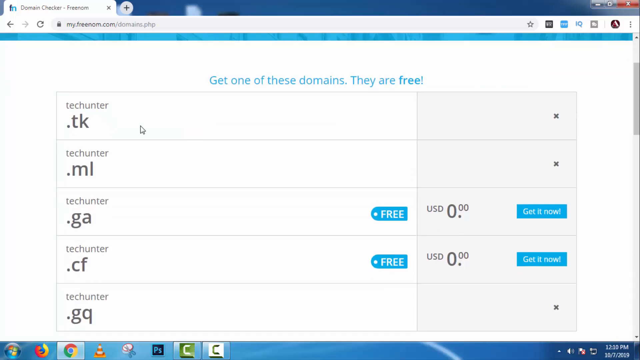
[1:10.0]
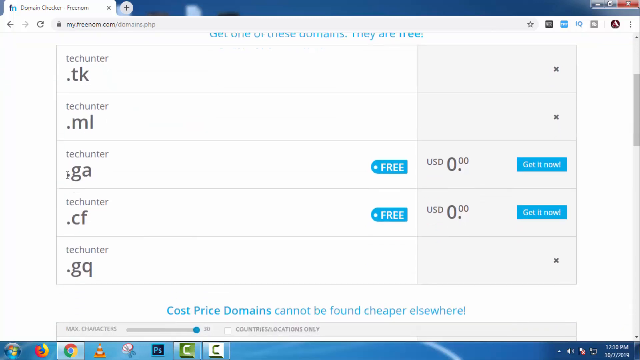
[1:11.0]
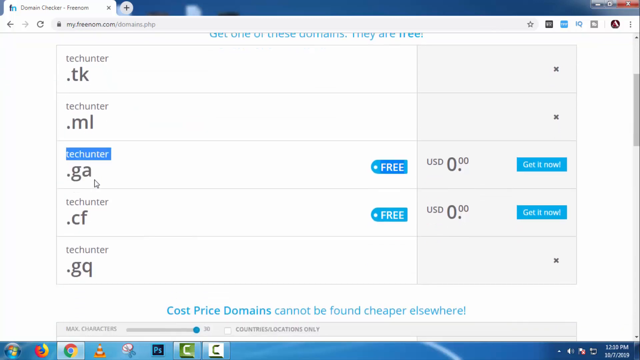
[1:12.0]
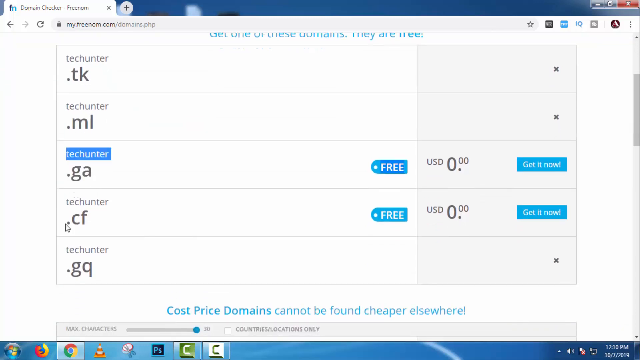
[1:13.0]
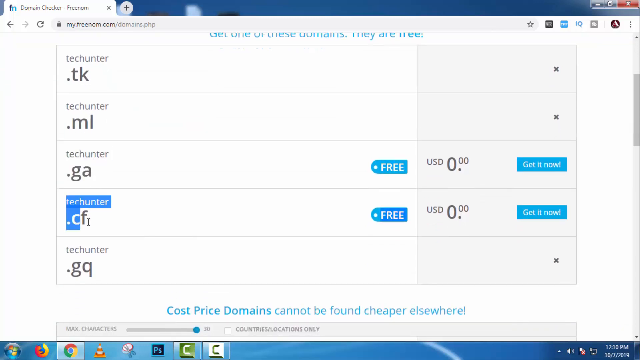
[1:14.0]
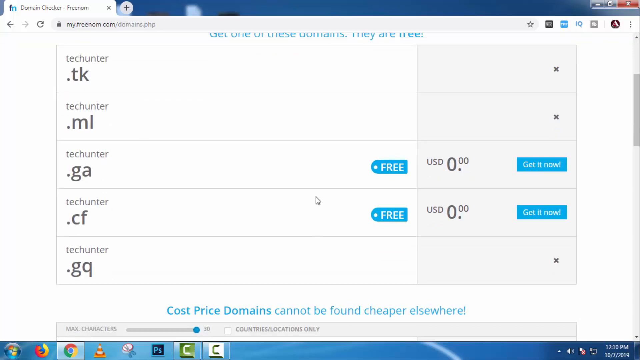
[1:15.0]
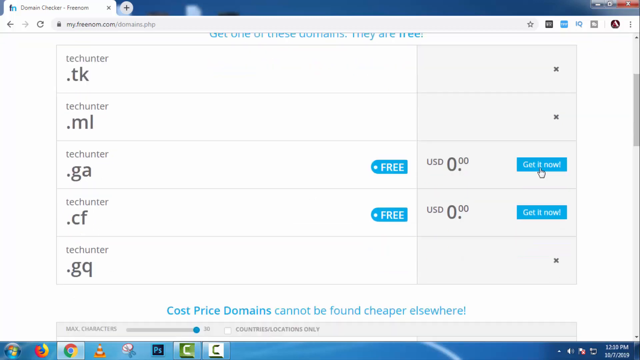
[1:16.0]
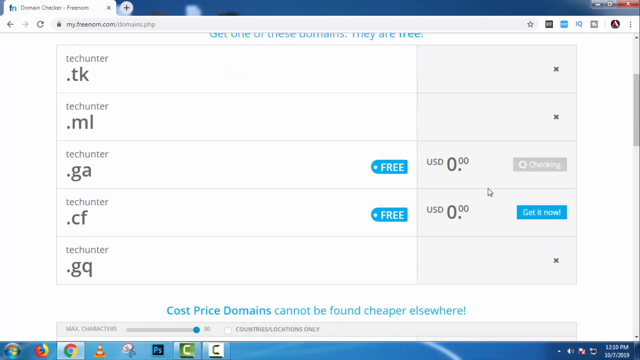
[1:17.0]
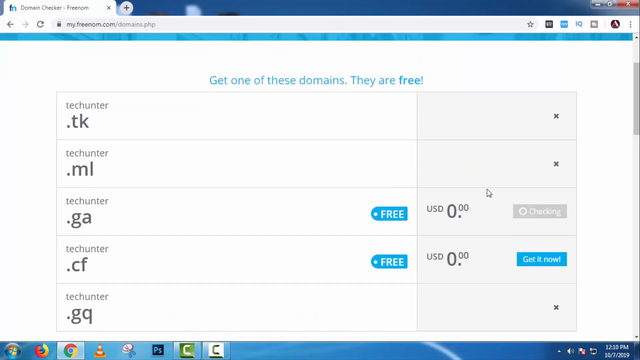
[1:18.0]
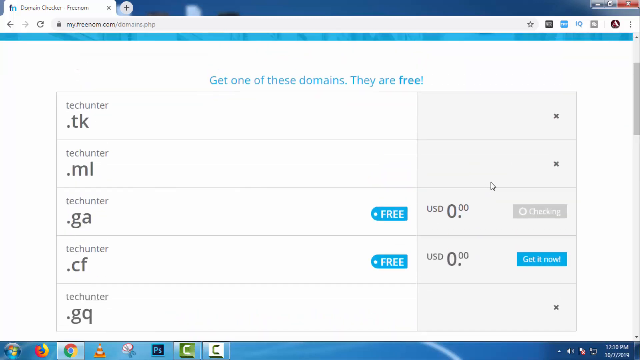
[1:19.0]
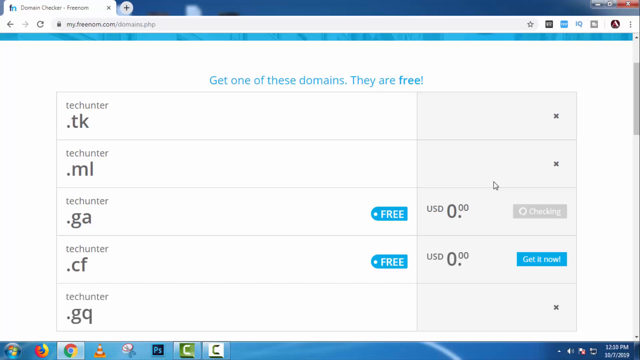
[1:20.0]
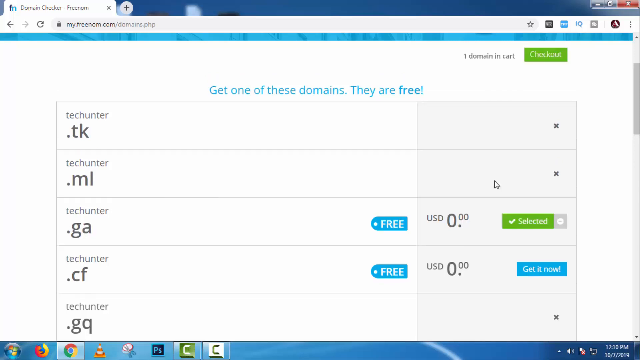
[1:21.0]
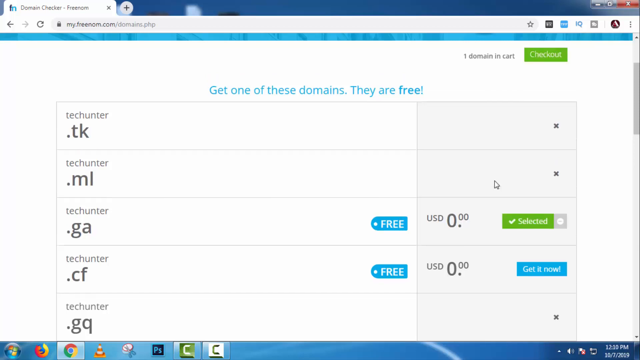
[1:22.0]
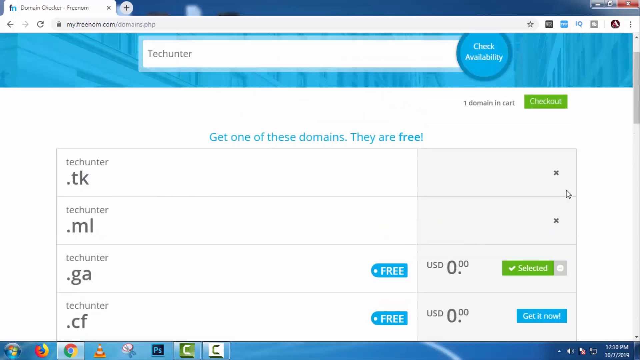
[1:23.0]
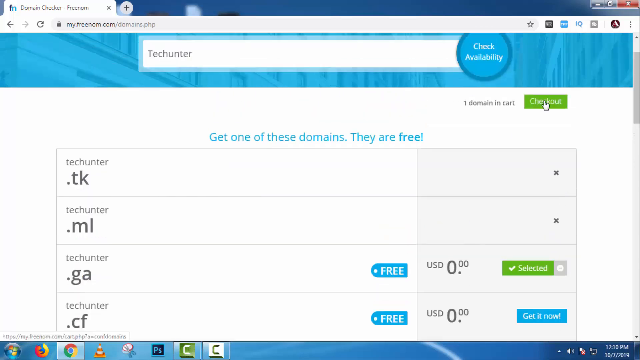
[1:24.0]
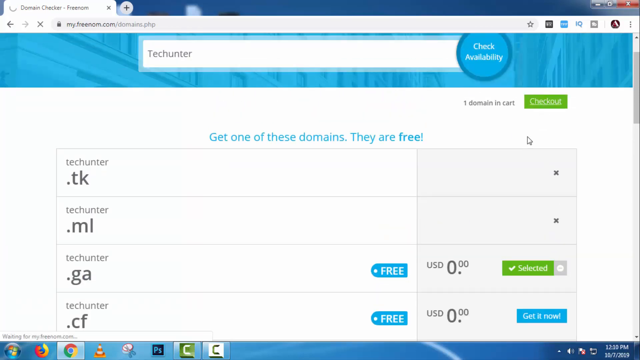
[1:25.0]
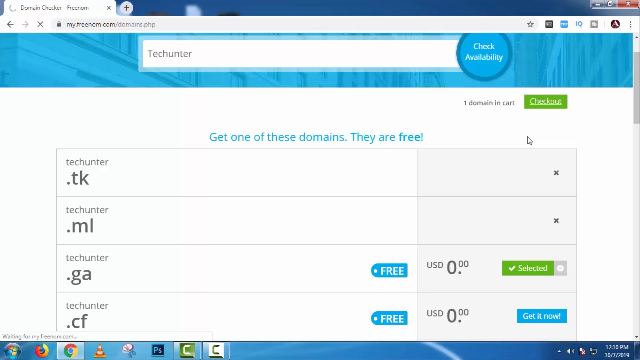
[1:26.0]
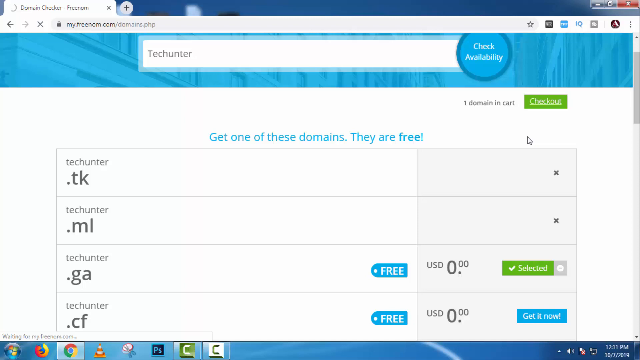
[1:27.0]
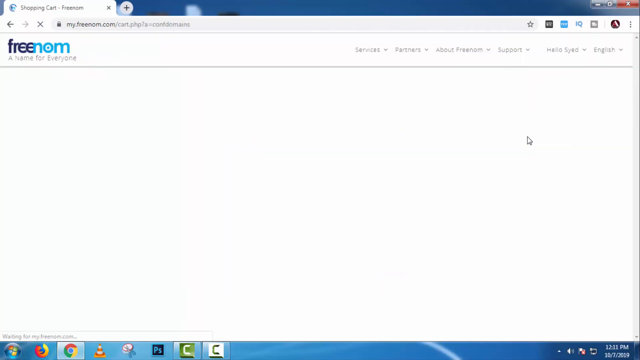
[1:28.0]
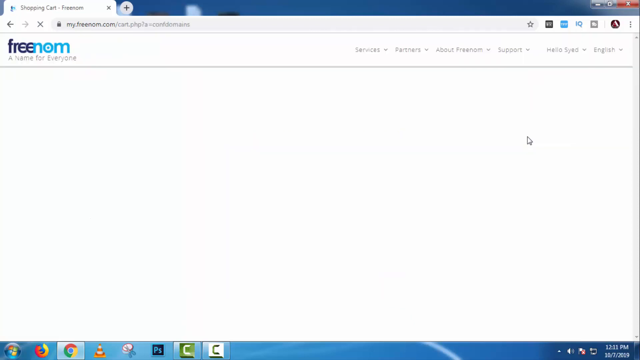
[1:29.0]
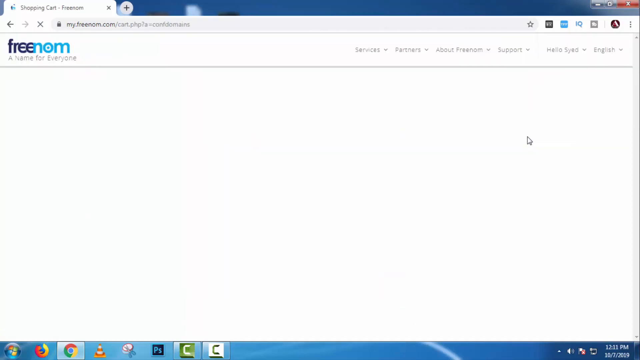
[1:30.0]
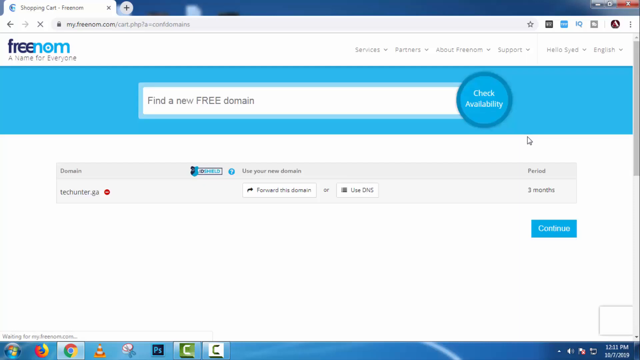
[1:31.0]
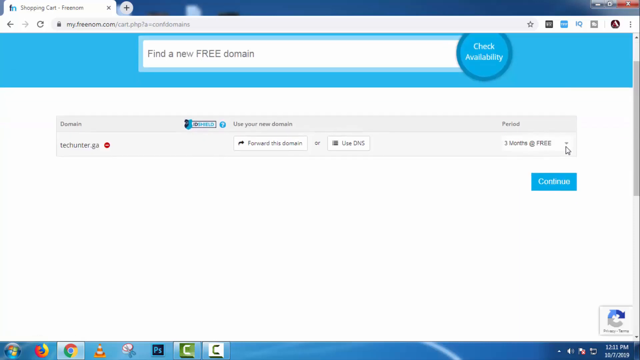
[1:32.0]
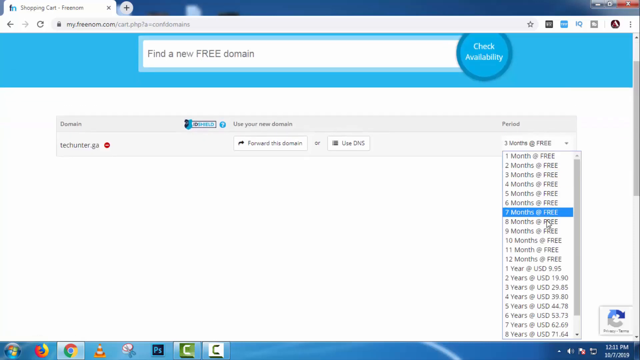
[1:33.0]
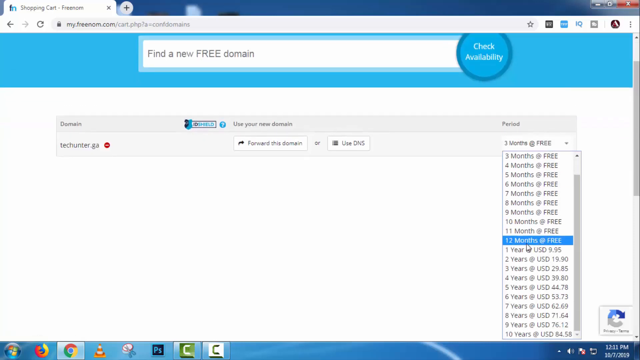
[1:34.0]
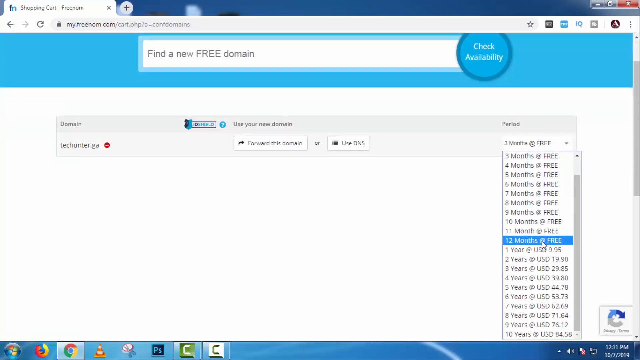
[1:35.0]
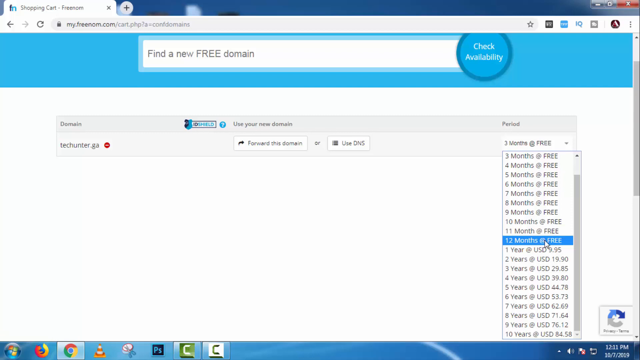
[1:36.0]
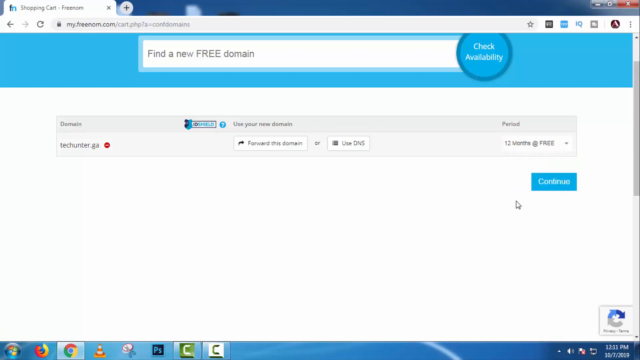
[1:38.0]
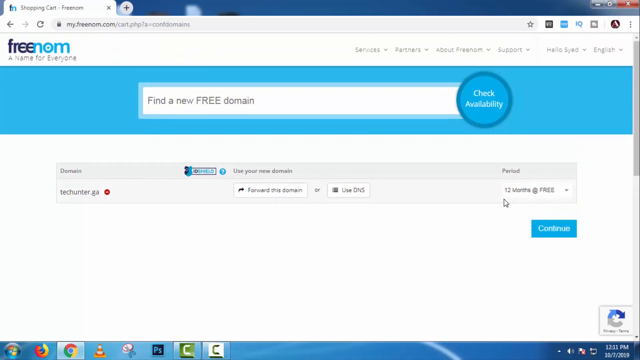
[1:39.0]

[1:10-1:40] The little tags are in the same blue, and to their right on the third and fourth rows is another small blue button reading "get it now." The page scrolls down and a couple of rows are highlighted, then "get it now" on the .ga line is clicked and the button changes to a green "selected." In the upper right, right below the check availability circle, a small green button reading "check out" appears. A blank screen follows, then a new one, apparently after the checkout button is clicked. On a white screen showing the order, "techhunter.ga" appears on the left with some other text, and a Continue button is in the lower right. Continue is apparently clicked, and a dropdown menu offers how many months free, with several options of months and even years; "12 months free" is clicked.